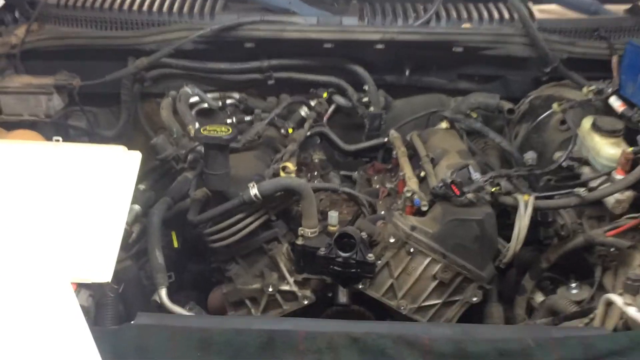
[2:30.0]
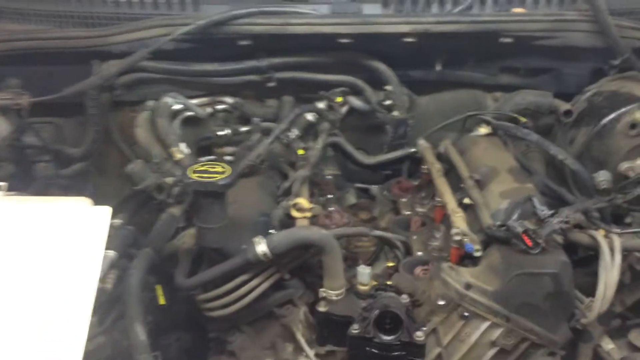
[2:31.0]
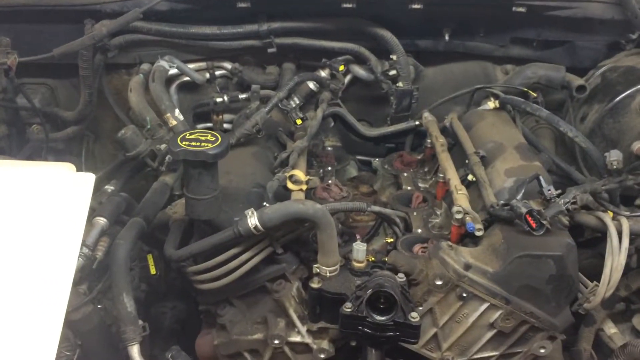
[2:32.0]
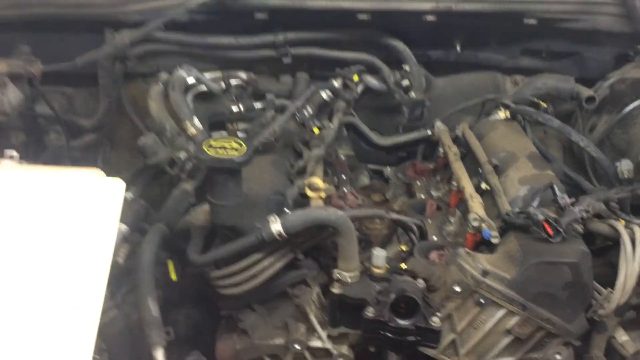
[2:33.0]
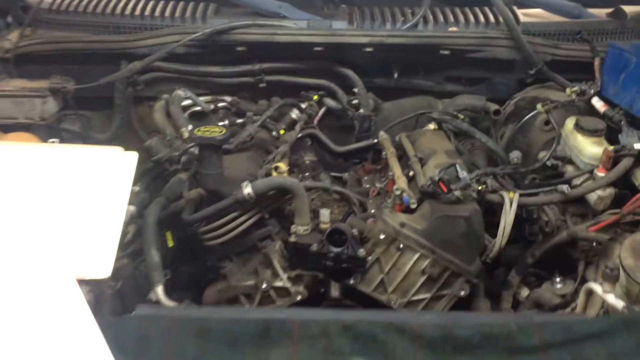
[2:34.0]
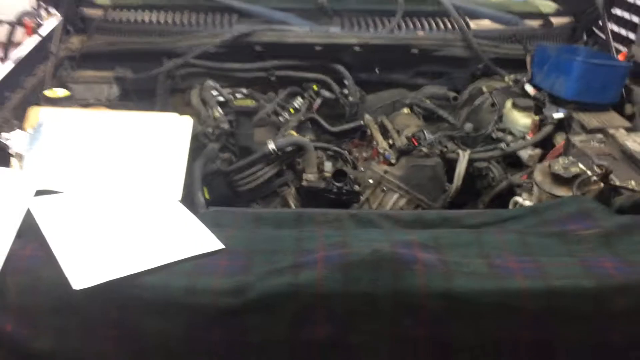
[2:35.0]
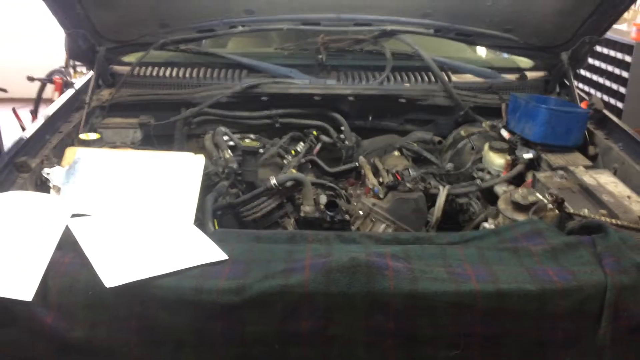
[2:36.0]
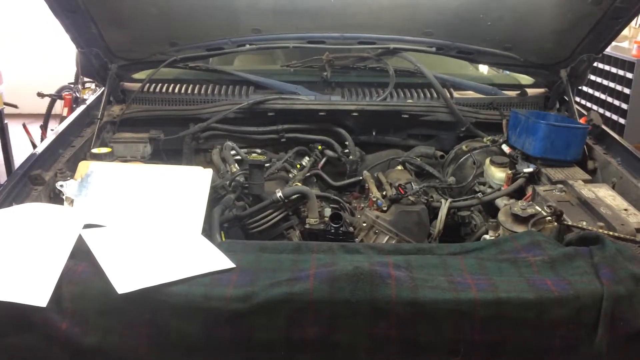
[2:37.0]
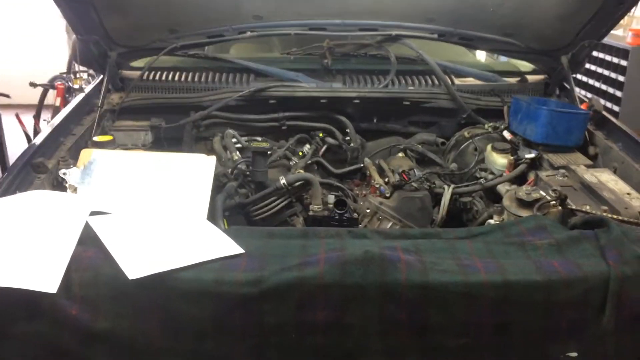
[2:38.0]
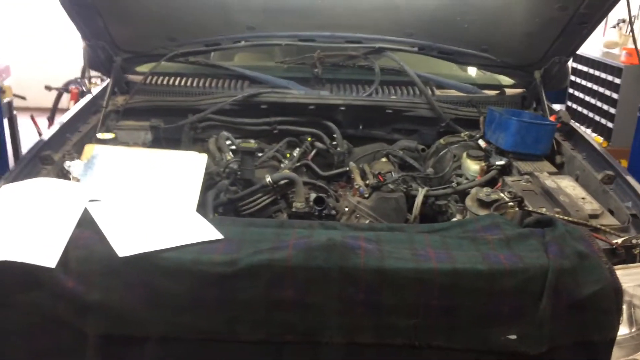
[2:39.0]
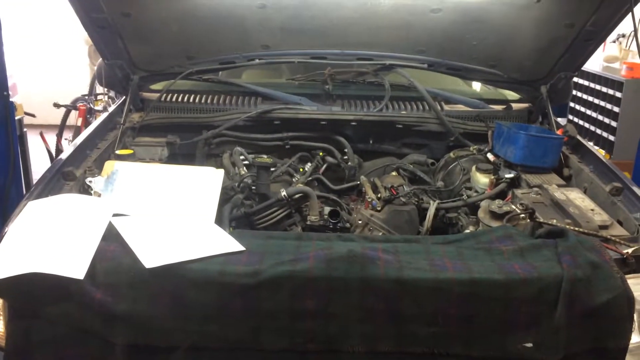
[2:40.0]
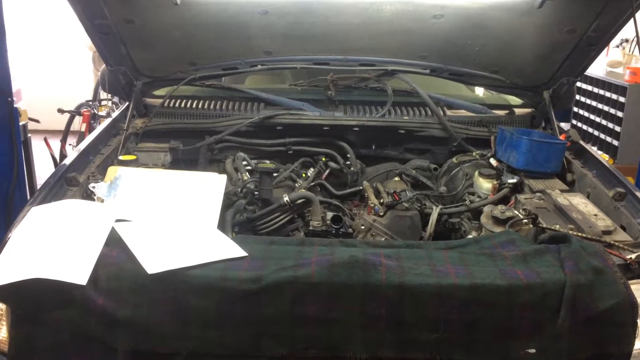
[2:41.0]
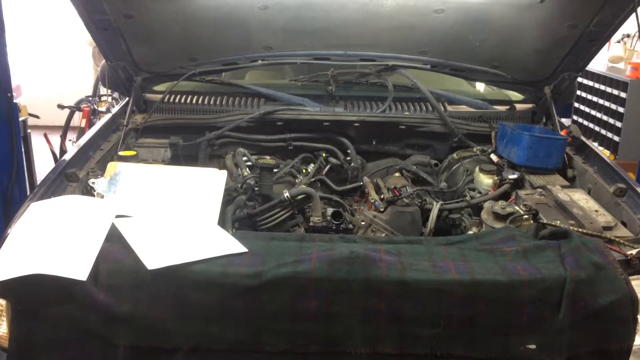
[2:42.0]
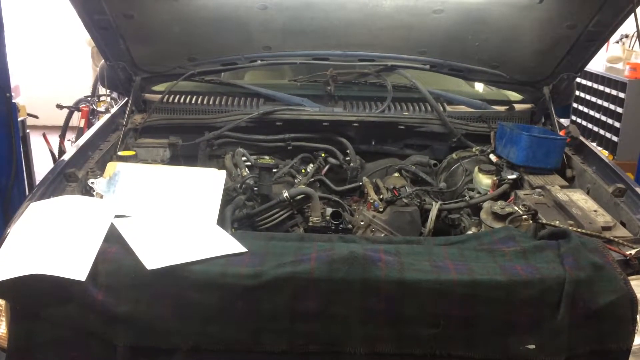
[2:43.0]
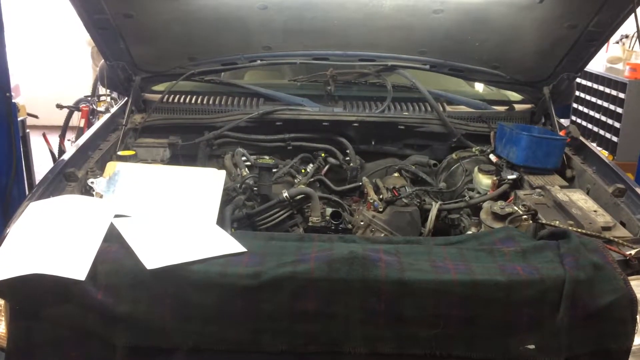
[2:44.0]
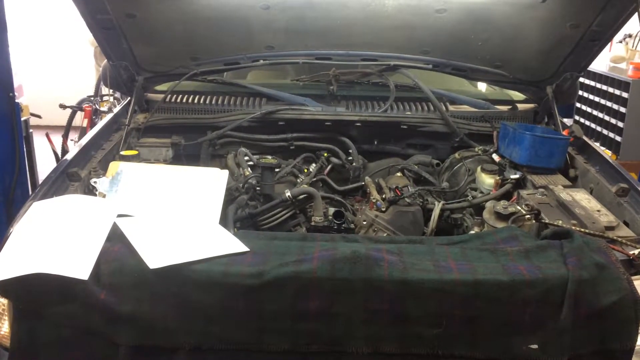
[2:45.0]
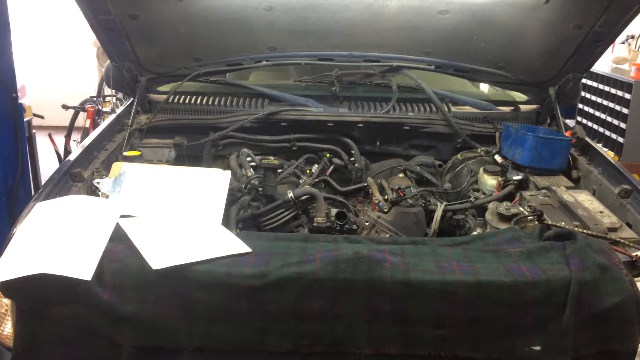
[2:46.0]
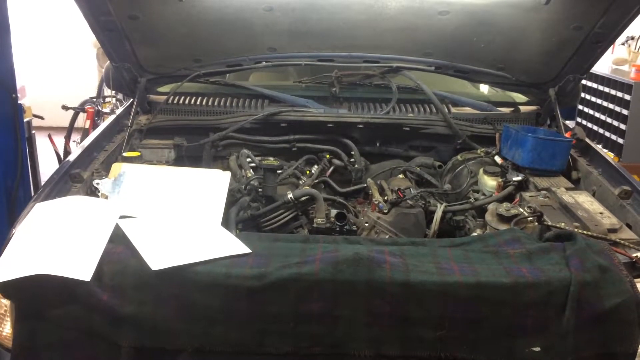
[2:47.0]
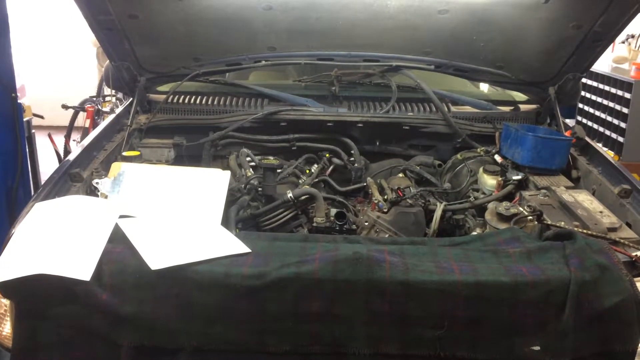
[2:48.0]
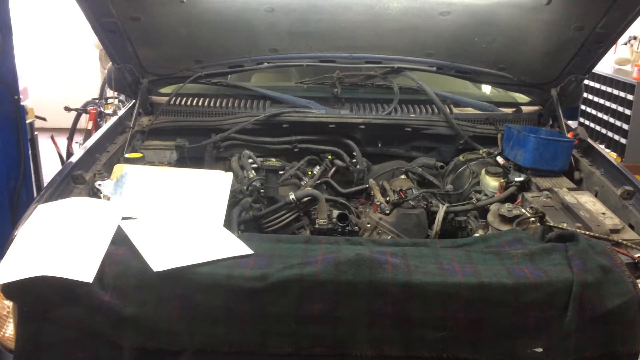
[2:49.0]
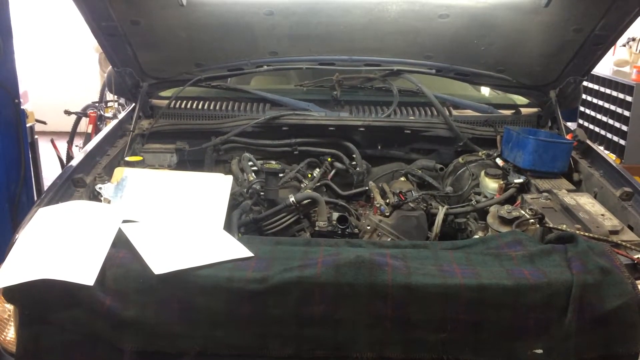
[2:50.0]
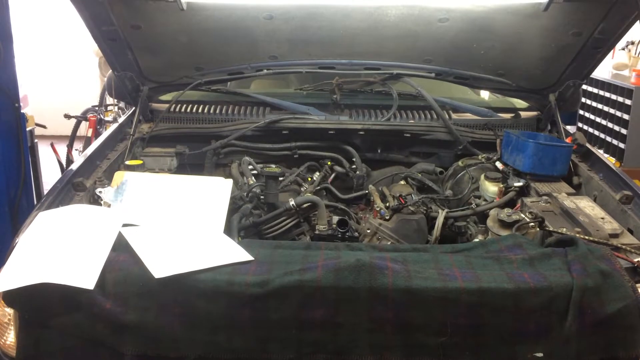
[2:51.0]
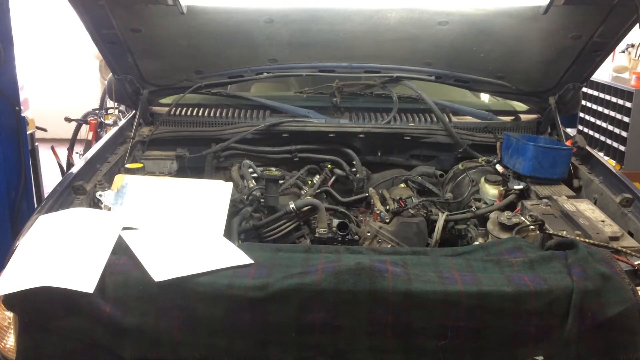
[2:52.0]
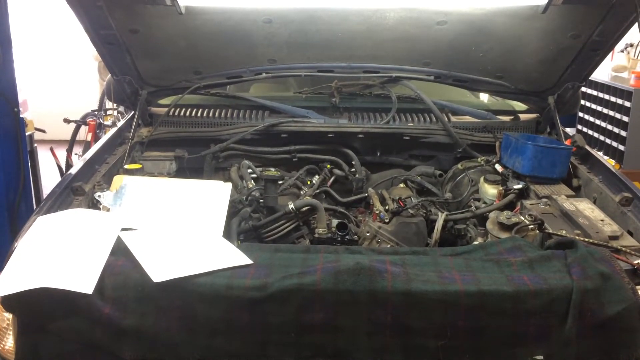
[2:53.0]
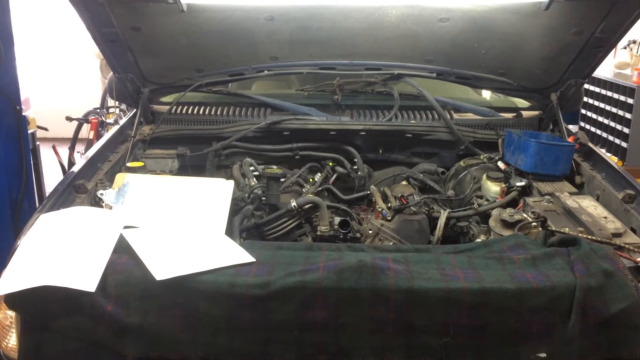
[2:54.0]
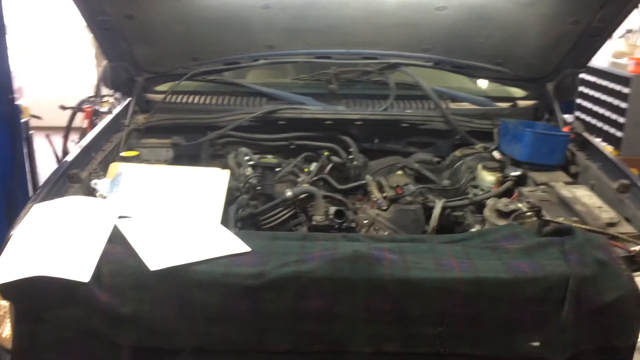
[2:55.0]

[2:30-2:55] The camera shows the hood of the car and what is underneath: dusty, black parts. It zooms out and then stays under the hood, simply showing it. This time the view is from the front, centered, so both sides of the car are visible, and the rear-view mirror is slightly visible on the left. A clipboard with some white pieces of paper is at the bottom left corner of the open hood. A dark blue, tartan-patterned cloth covers the front of the car, including the headlights. A blue bucket or container is at the top right, underneath the hood. The top of the hood is white, while the inside is all black and very dusty, with wiring running across the car.